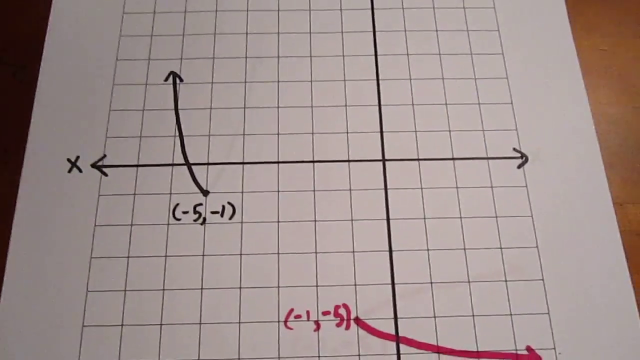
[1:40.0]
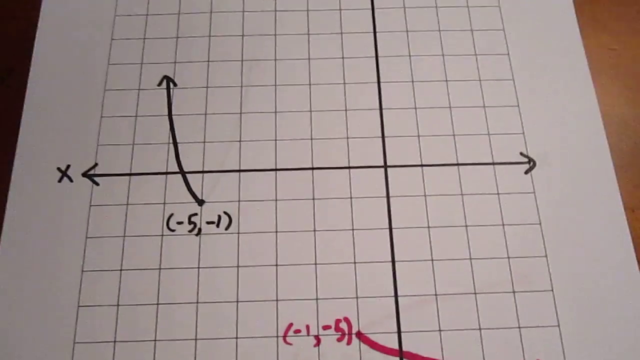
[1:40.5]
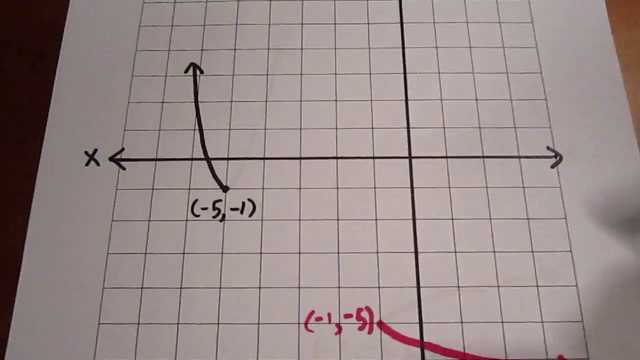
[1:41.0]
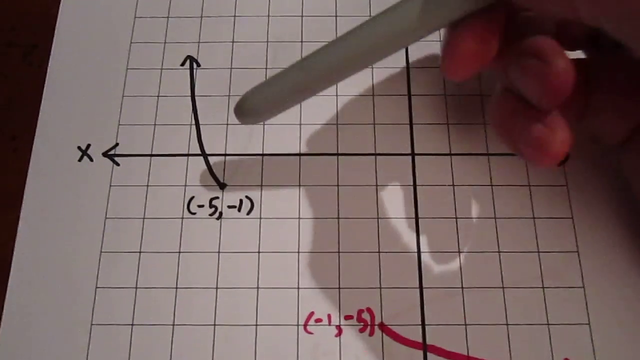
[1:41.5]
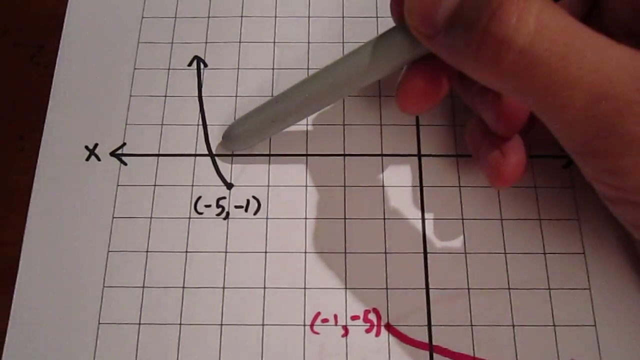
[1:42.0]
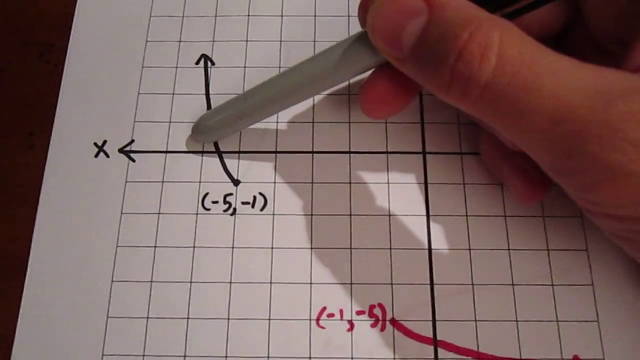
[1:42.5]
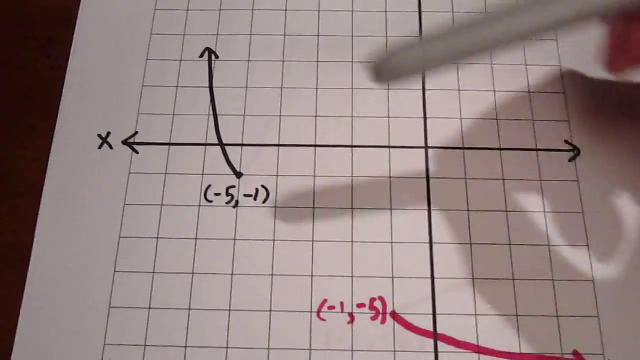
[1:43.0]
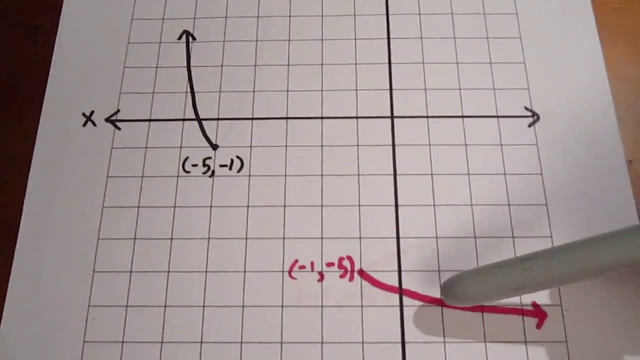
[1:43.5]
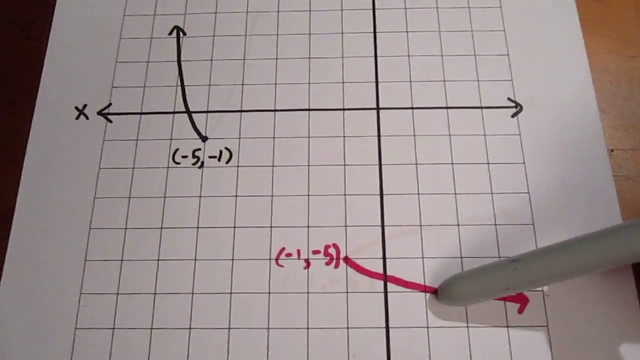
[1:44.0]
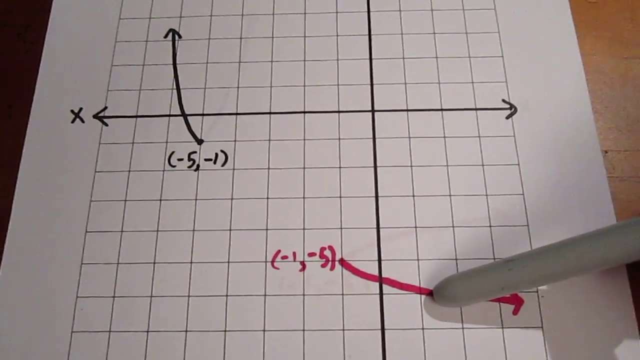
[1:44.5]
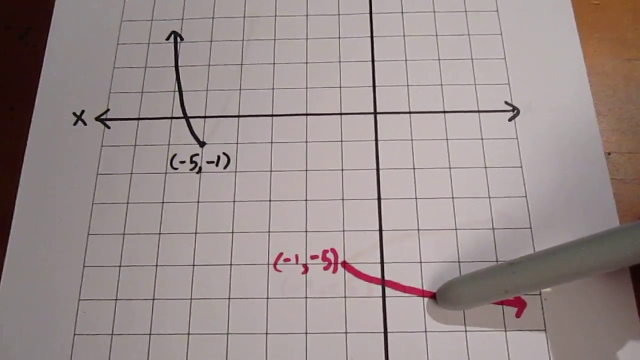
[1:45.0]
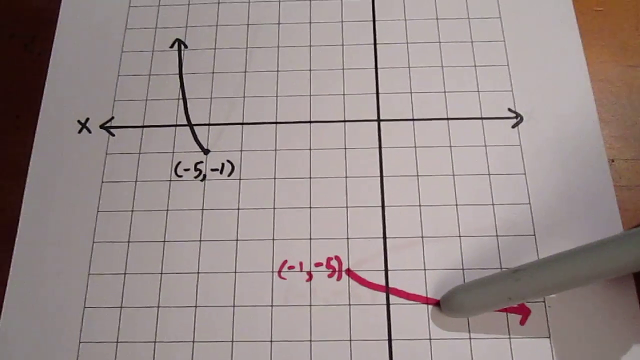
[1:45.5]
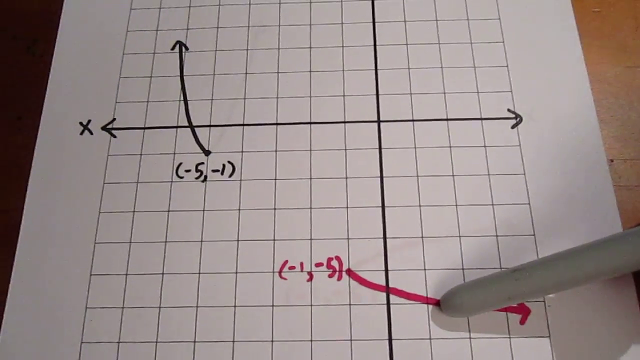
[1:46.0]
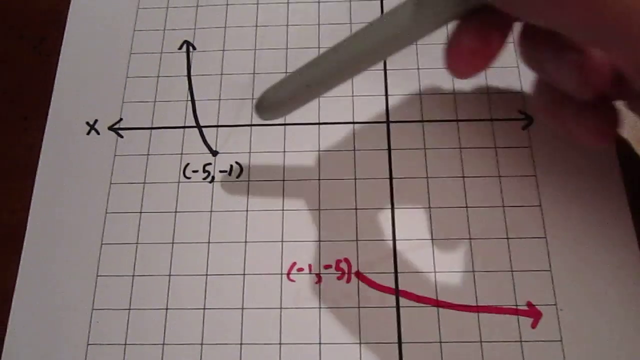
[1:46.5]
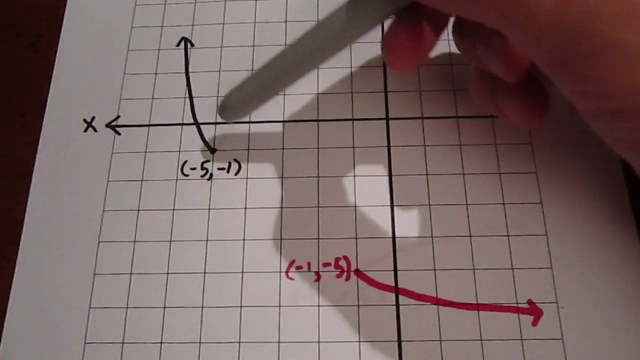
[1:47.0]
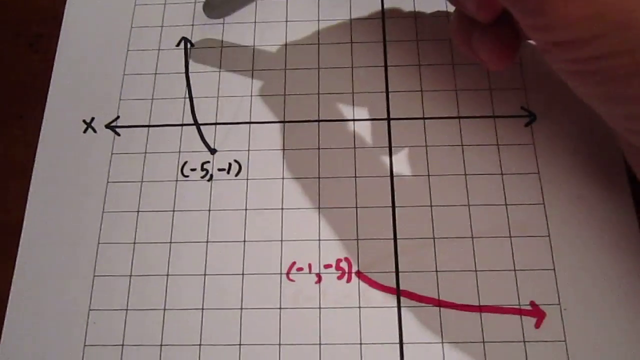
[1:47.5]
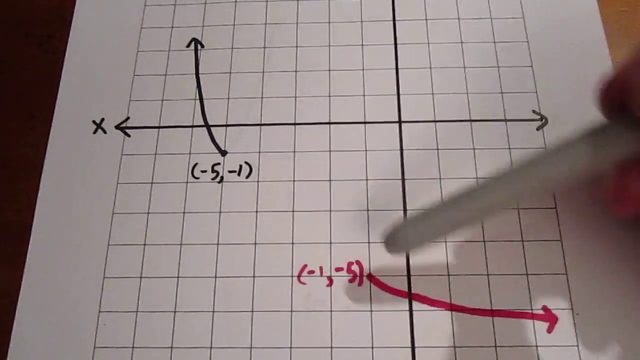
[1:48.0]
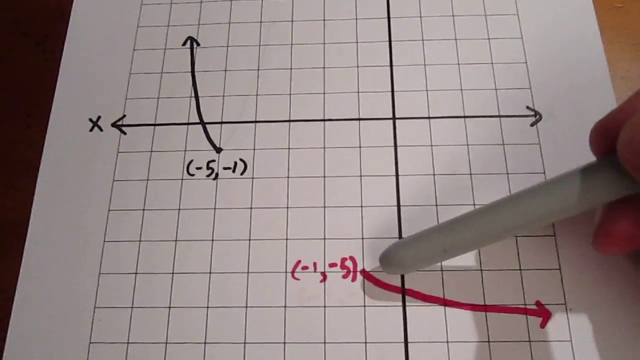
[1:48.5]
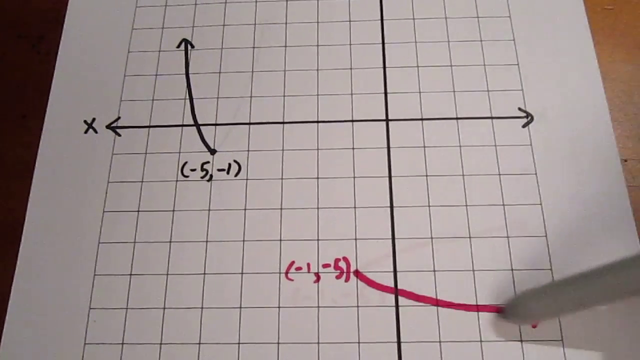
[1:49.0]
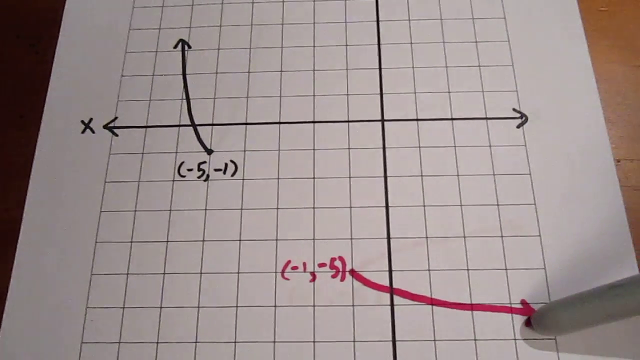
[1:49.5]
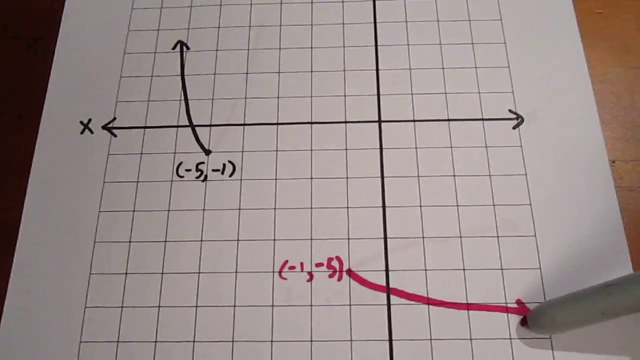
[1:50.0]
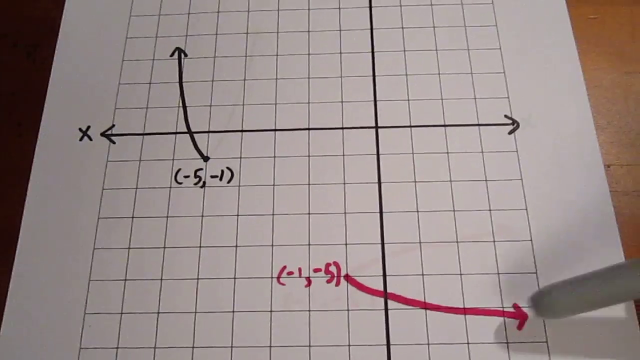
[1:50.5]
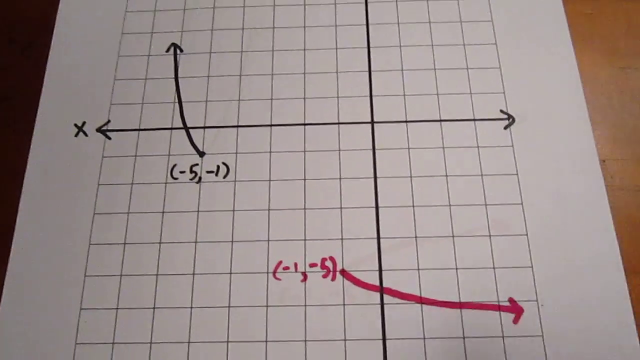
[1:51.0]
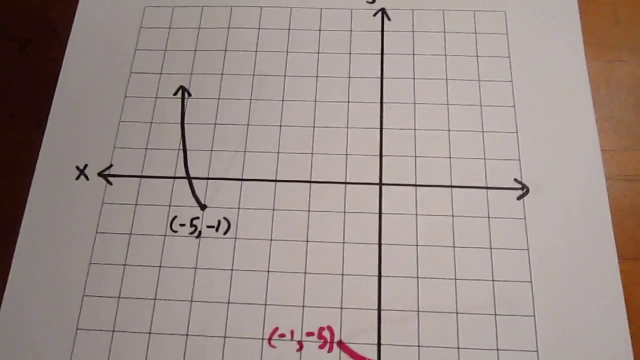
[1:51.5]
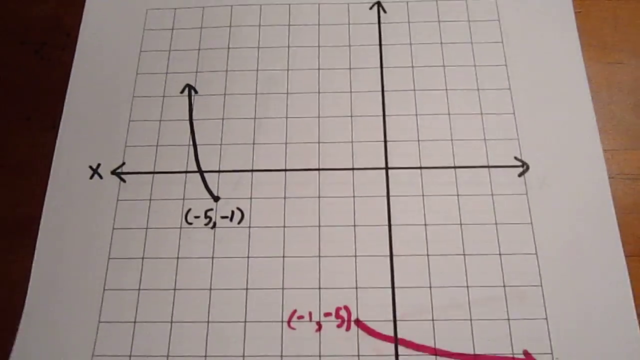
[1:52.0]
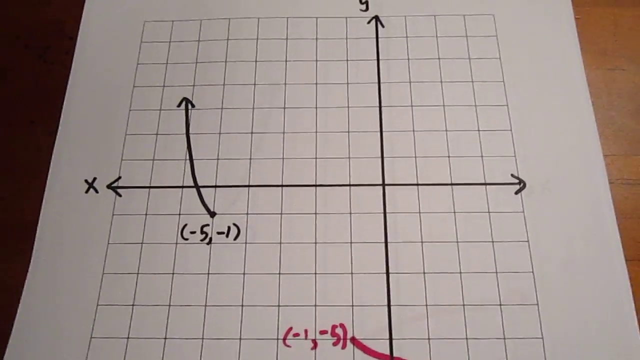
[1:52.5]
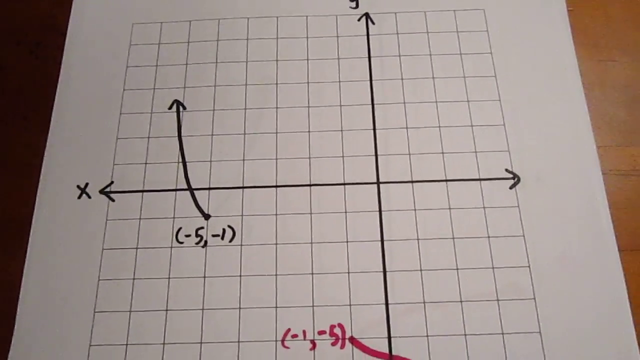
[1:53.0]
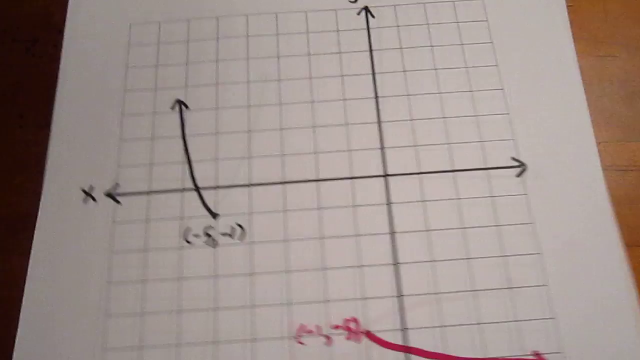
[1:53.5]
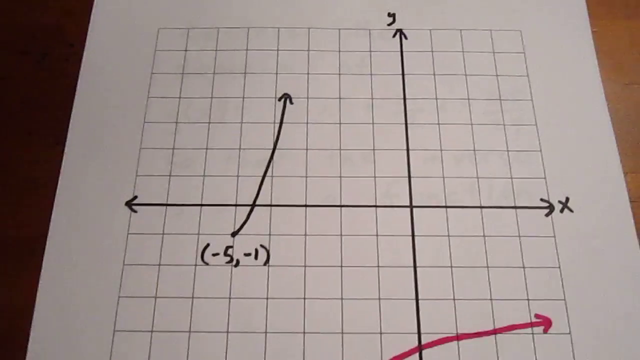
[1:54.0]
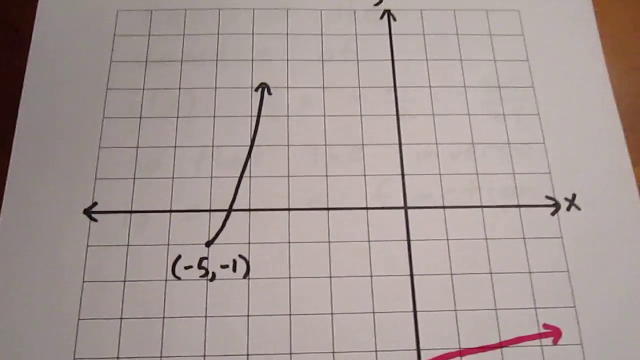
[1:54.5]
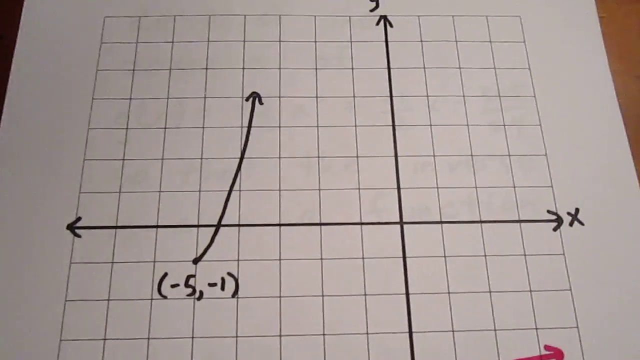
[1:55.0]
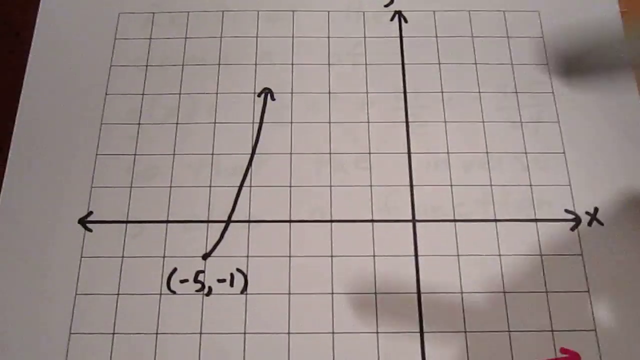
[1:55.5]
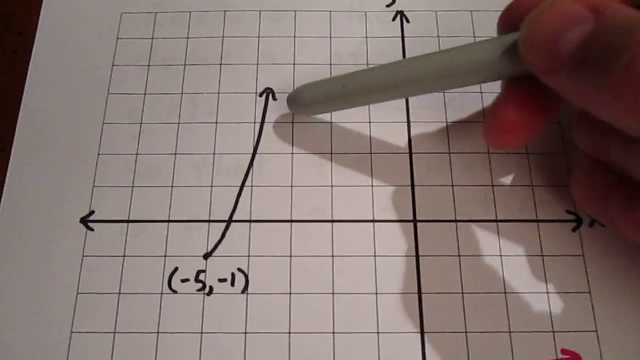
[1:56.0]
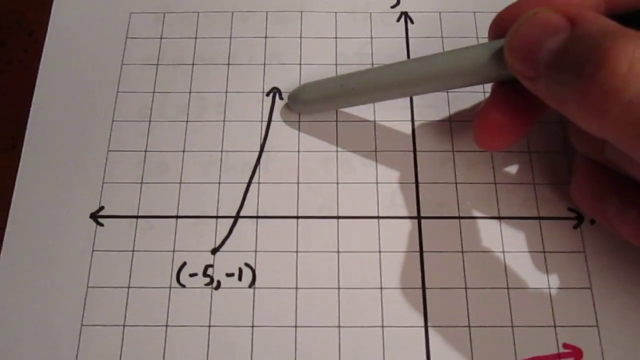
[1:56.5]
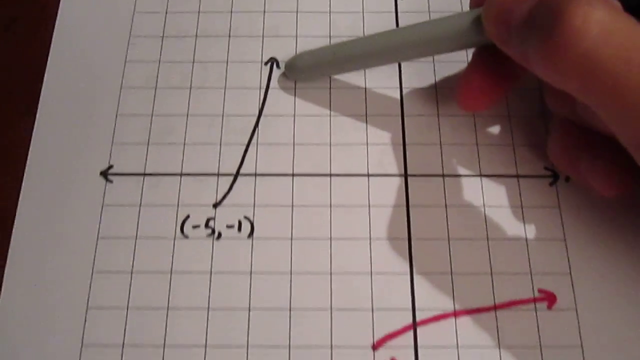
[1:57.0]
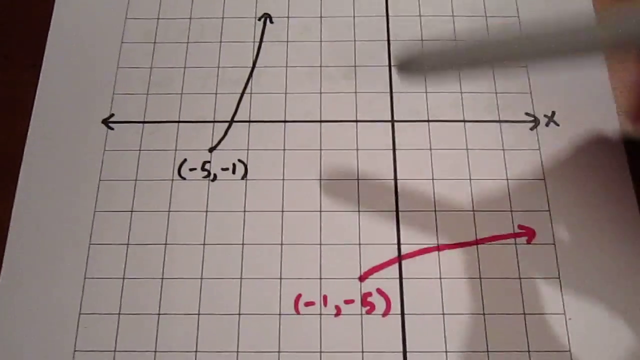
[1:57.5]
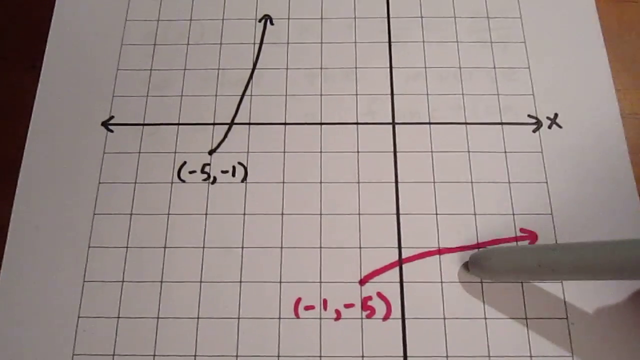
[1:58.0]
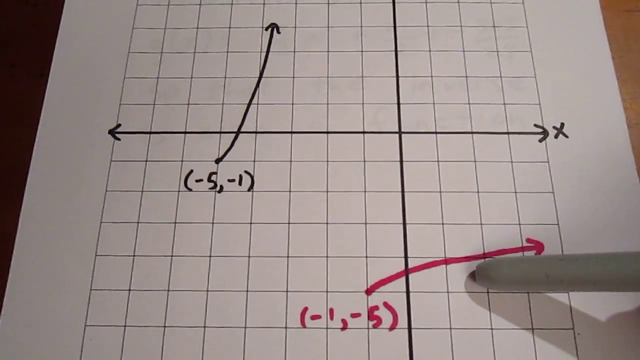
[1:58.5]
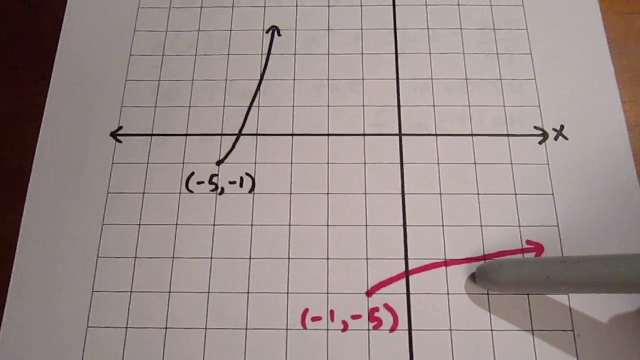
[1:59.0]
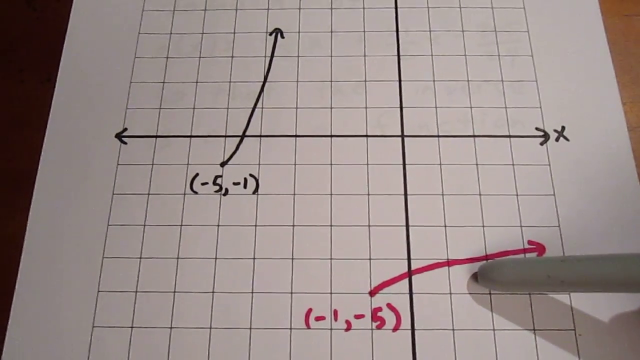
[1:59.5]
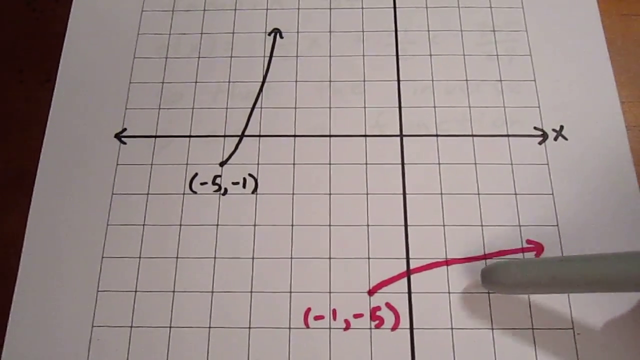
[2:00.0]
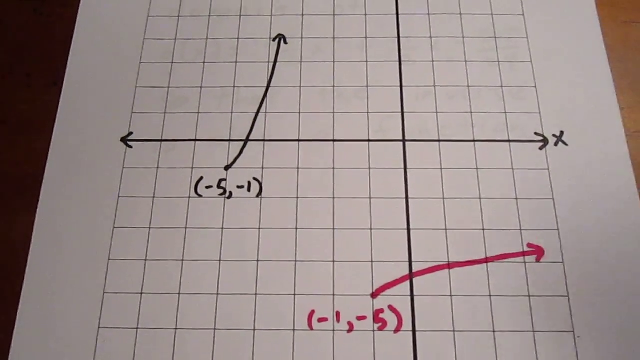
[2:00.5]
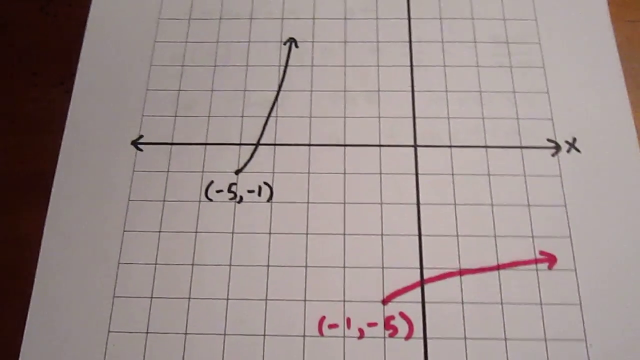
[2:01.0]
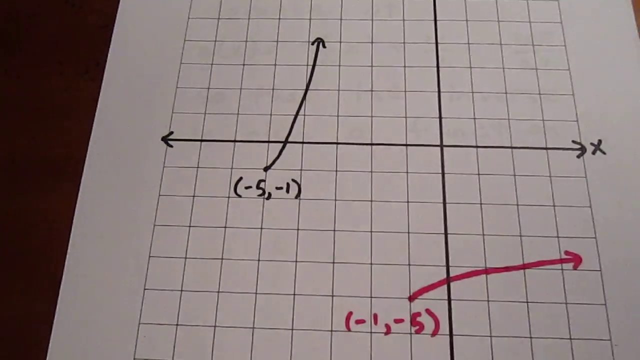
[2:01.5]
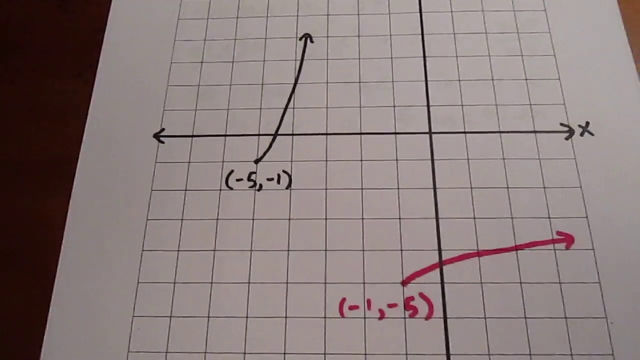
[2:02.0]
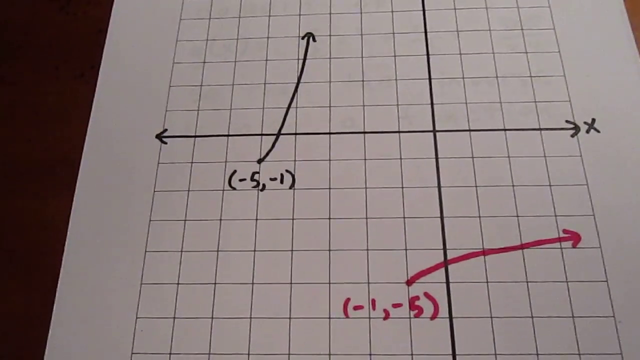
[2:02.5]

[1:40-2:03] On this page, it looks like the drawing of the function is beginning, with one side of it shown. The next page has another side of the black function and the red function on the Cartesian coordinates, apparently showing how the function is constructed on the graph. The sheet is pulled away, revealing another graph showing the other part of the reflection, emanating from x = −5, y = −1; this is the part further to the right, apparently the second part of the parabola. Then the equivalent part of the red function is shown, the highest part, which is also the second part of that parabola.